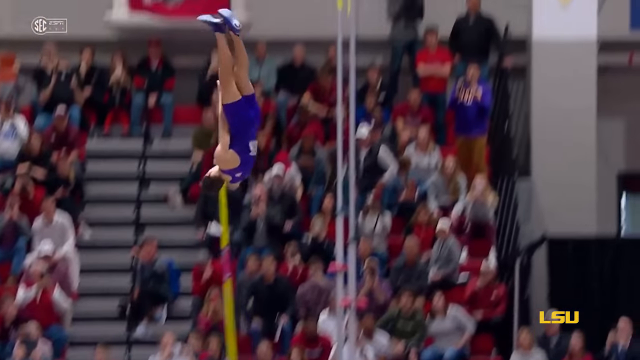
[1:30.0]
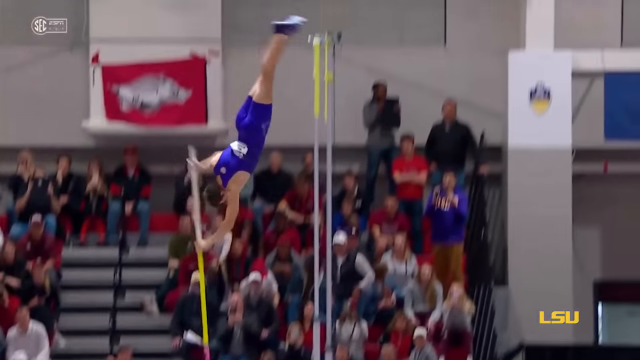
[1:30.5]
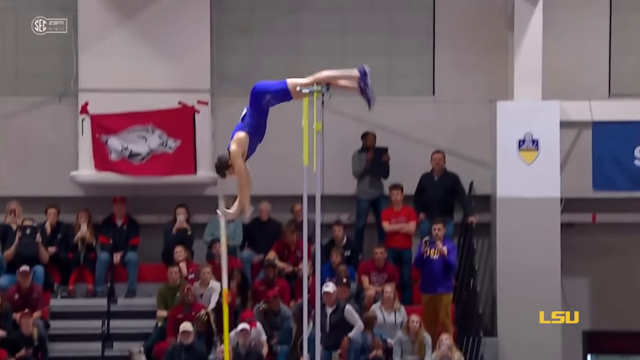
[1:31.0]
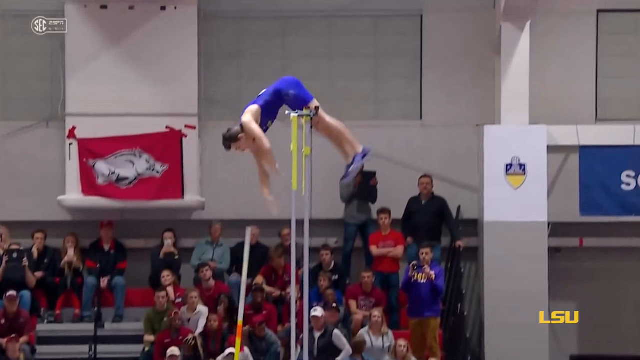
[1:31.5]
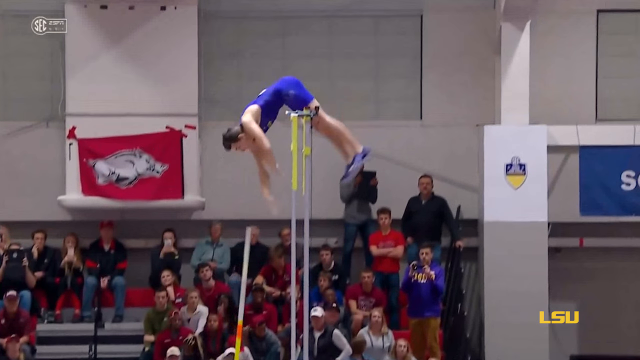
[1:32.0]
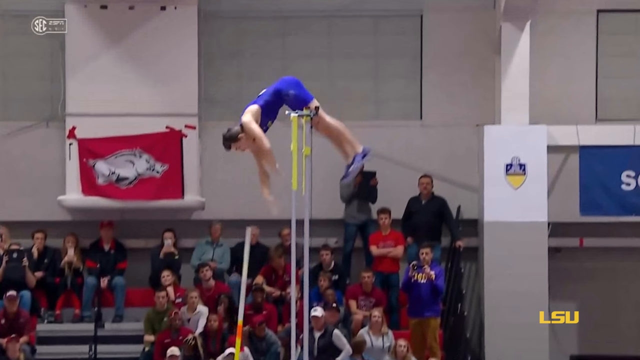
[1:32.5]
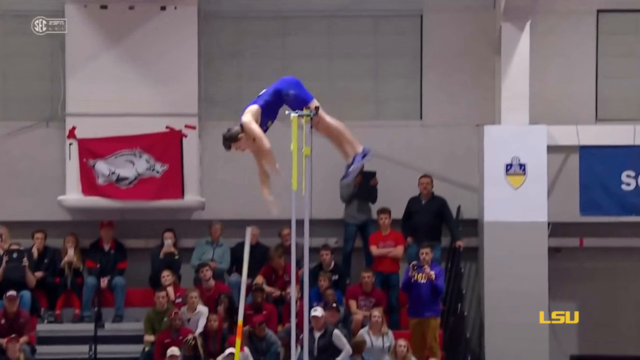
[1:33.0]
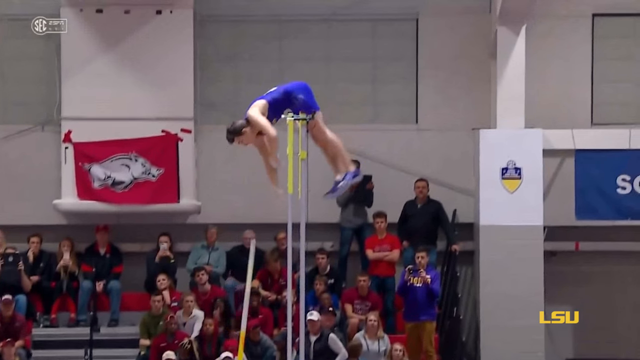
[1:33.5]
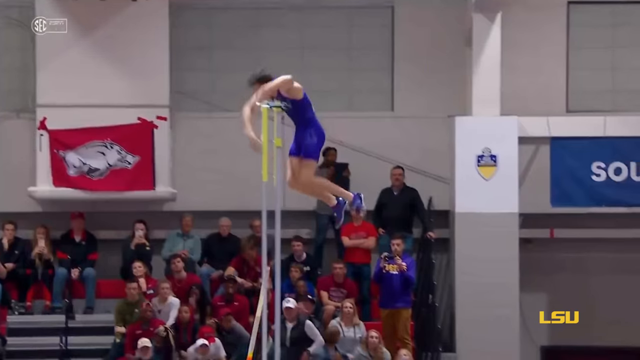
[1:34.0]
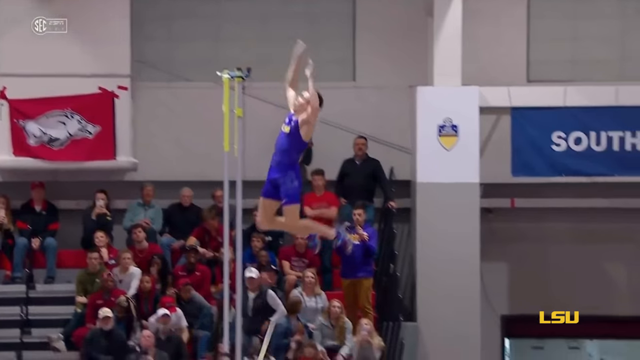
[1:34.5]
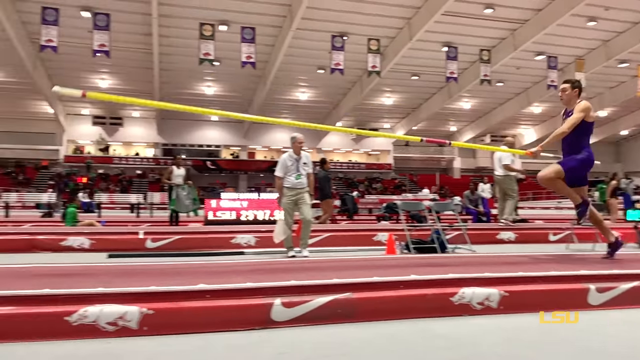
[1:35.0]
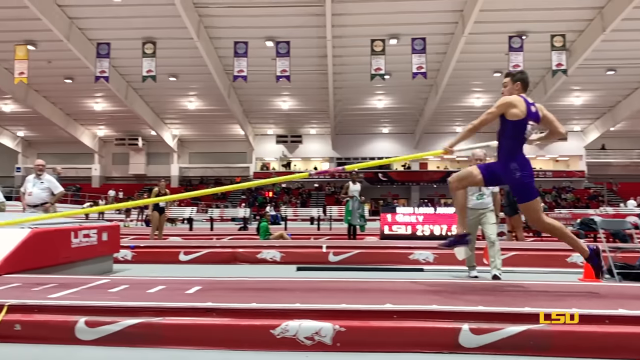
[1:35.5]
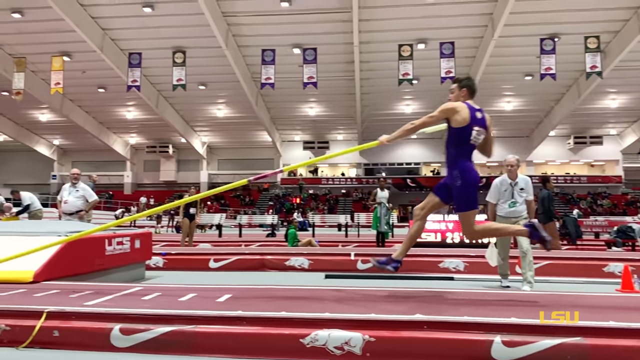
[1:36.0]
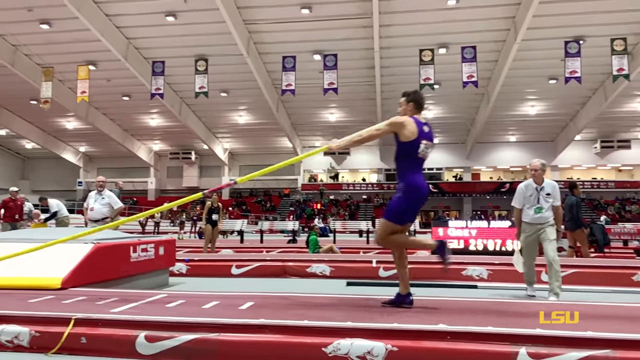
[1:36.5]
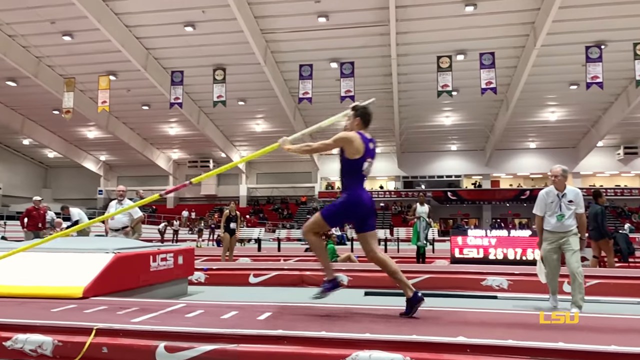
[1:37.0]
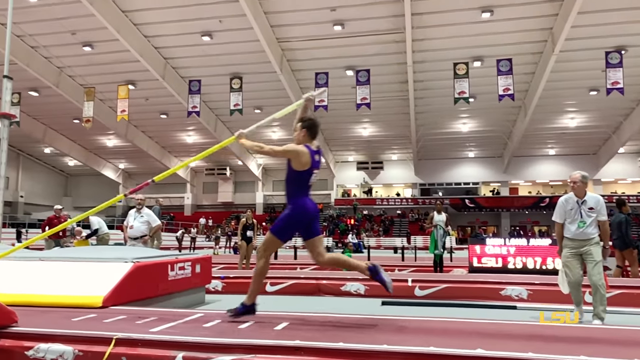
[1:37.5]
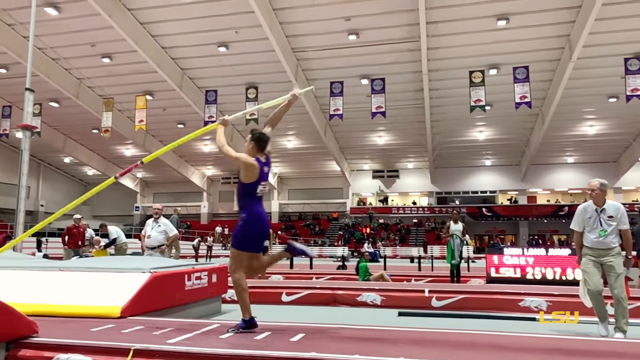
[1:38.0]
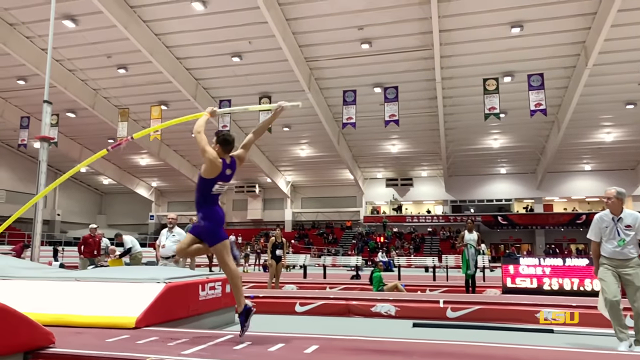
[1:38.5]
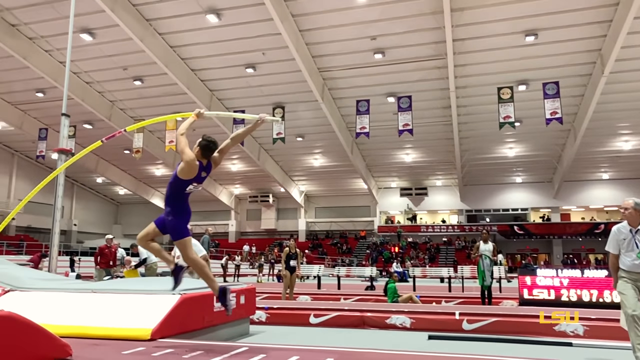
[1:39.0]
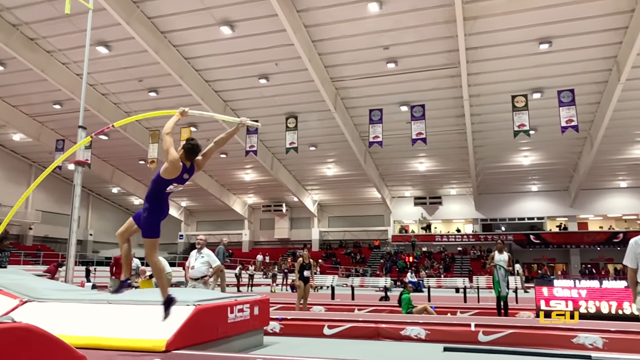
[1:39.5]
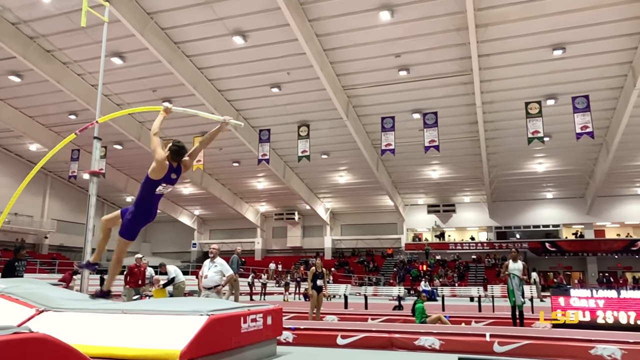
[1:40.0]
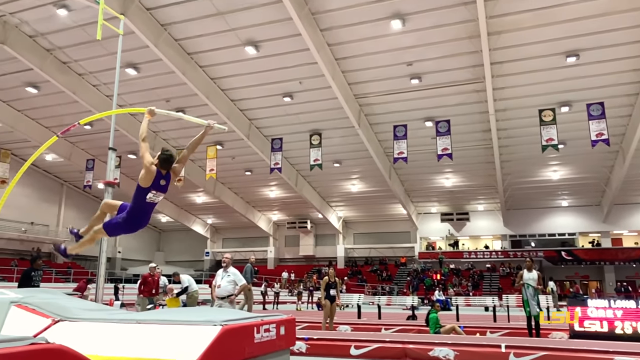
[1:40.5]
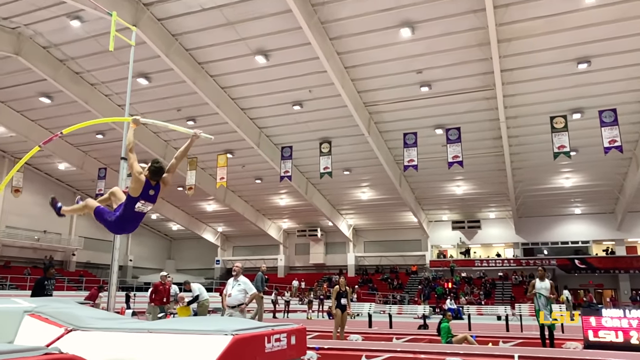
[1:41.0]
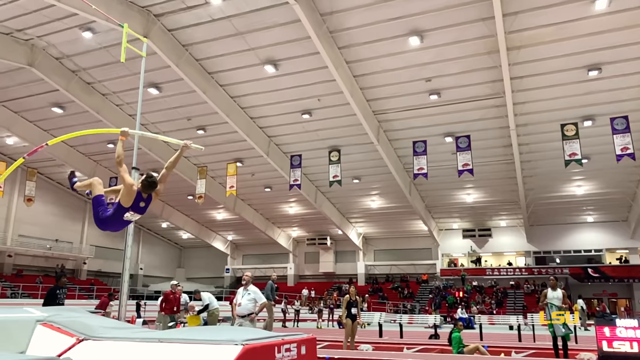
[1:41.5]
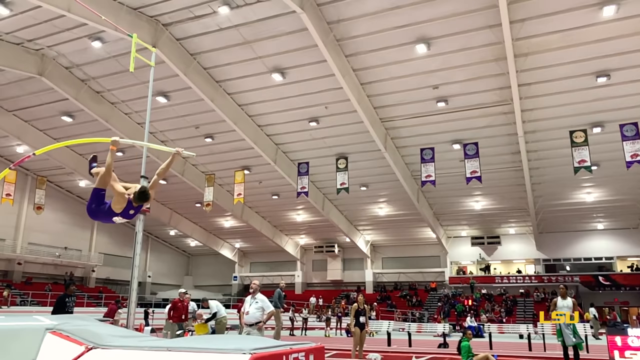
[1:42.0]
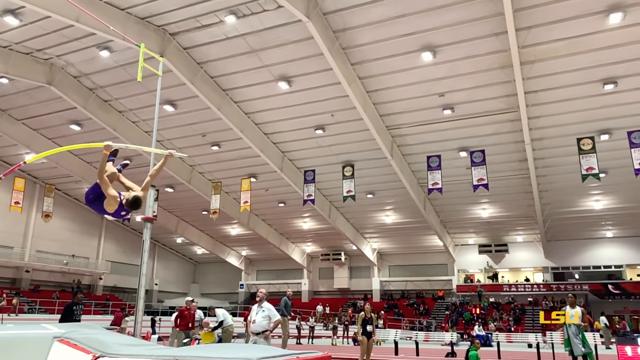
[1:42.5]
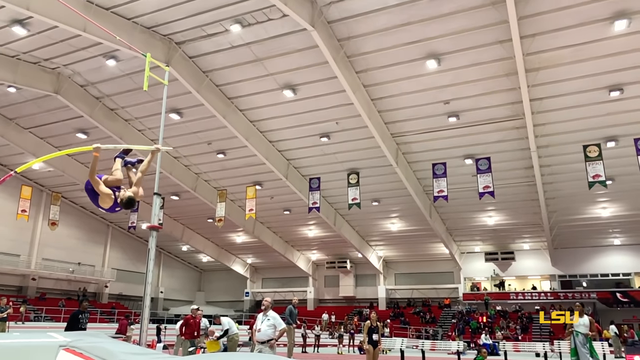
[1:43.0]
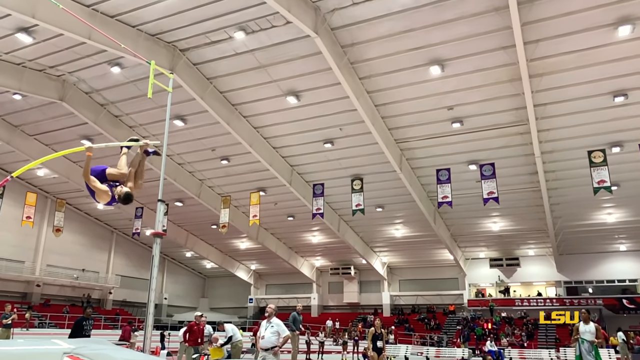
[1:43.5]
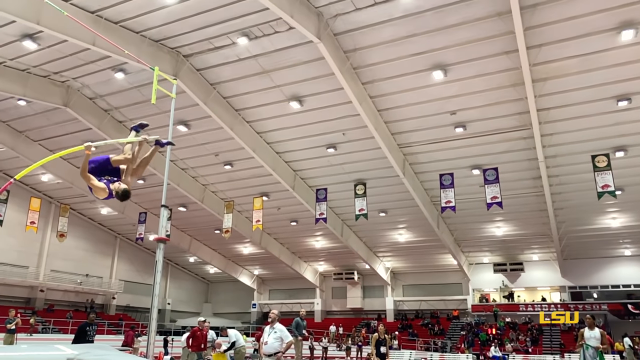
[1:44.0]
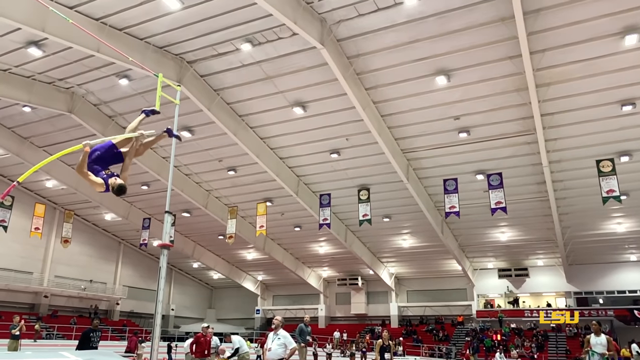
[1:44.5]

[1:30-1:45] The pole bends a lot as he lifts his leg up, and as he goes up he gets over the bar. He appears to do a flip on the way up. His shoes seem to be the same ones as in the earlier shots. The judges in the background all wear white shirts and khaki pants, and the crowd in the background does not seem to be very large. Nike symbols are located everywhere on the platform, suggesting the event may be sponsored by Nike. The competition is probably called UCS, and his name and the height are shown on the board.